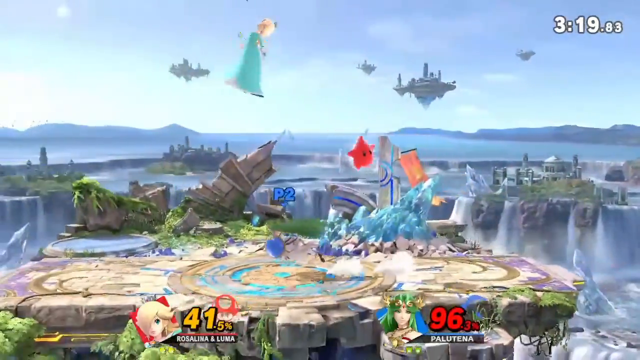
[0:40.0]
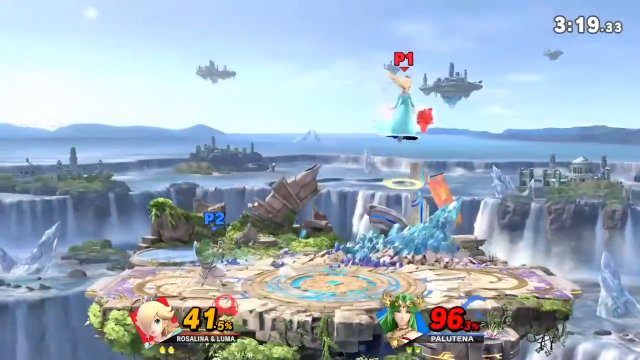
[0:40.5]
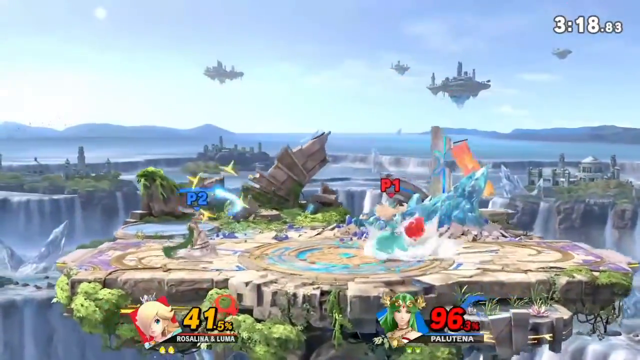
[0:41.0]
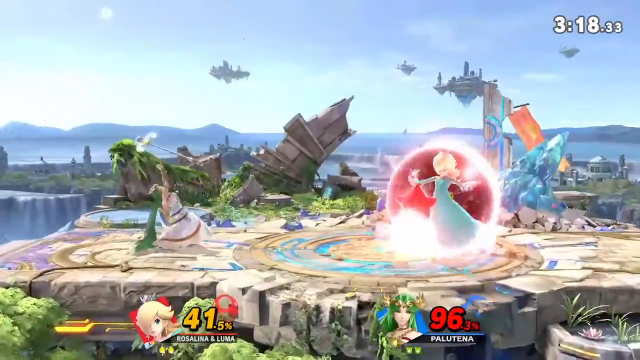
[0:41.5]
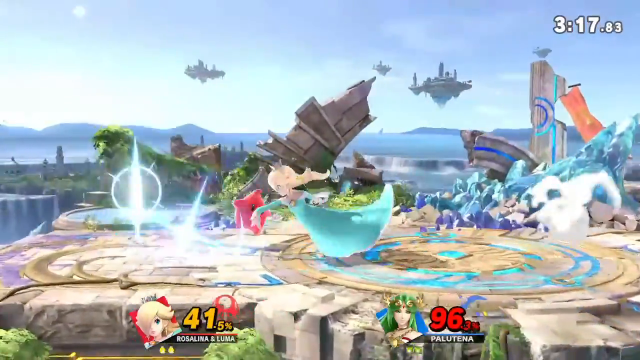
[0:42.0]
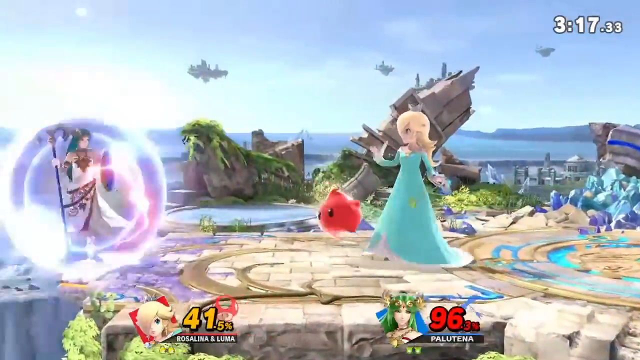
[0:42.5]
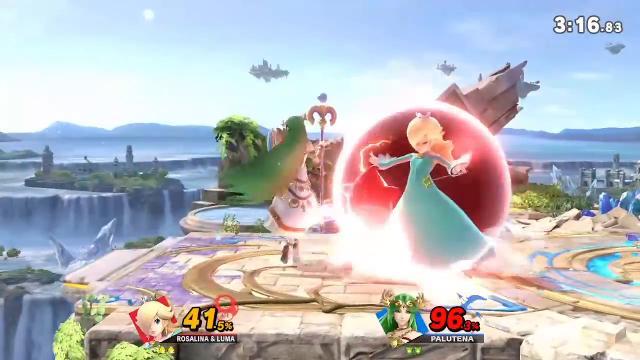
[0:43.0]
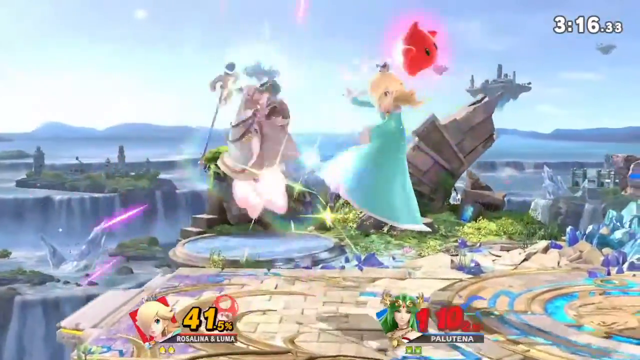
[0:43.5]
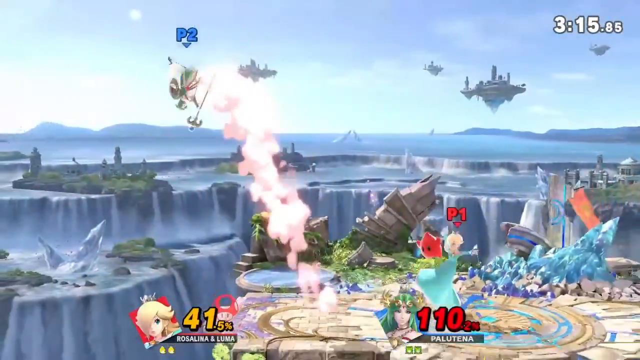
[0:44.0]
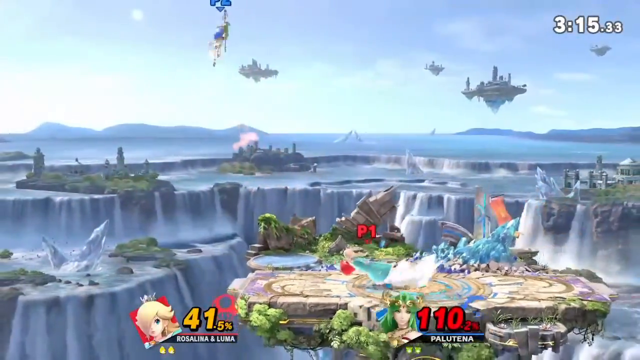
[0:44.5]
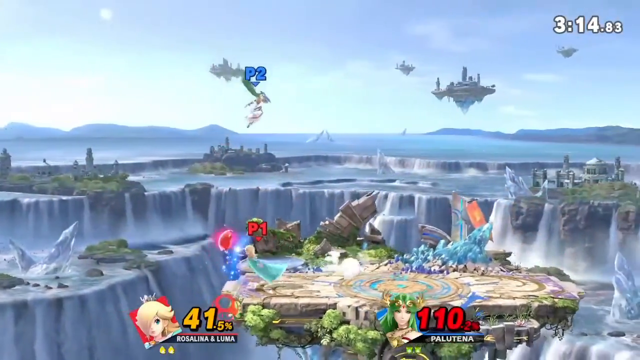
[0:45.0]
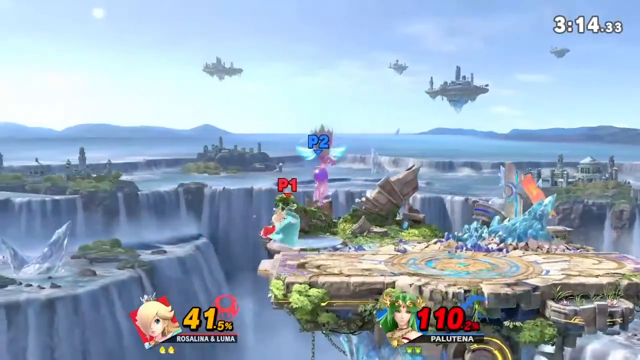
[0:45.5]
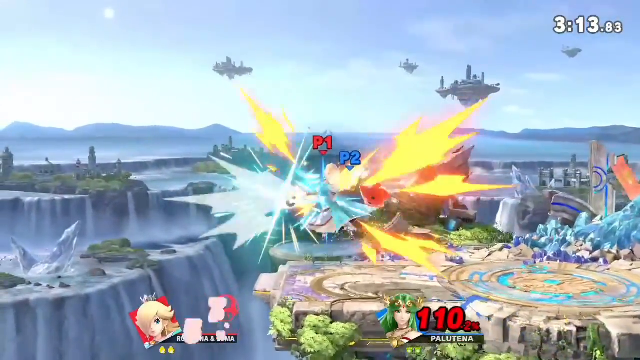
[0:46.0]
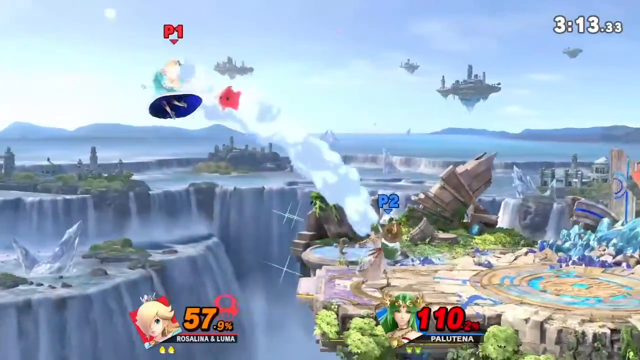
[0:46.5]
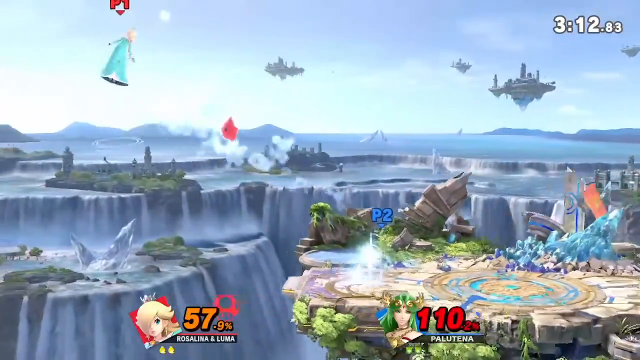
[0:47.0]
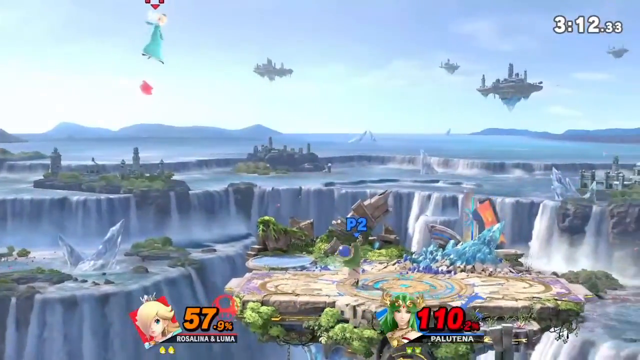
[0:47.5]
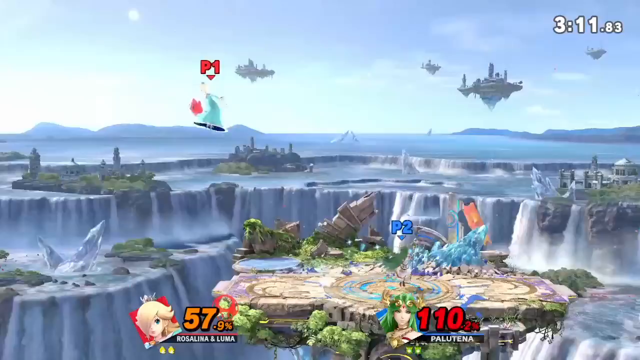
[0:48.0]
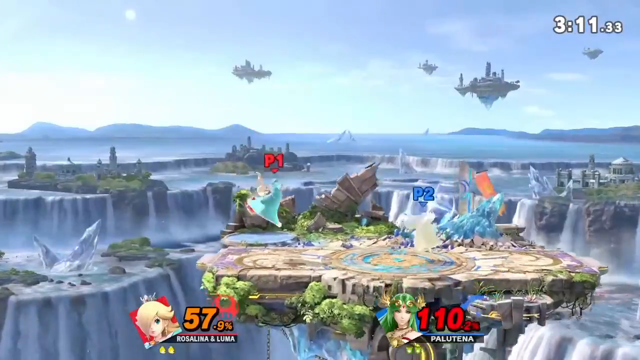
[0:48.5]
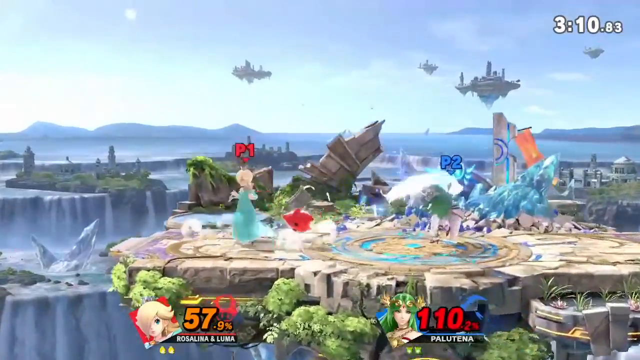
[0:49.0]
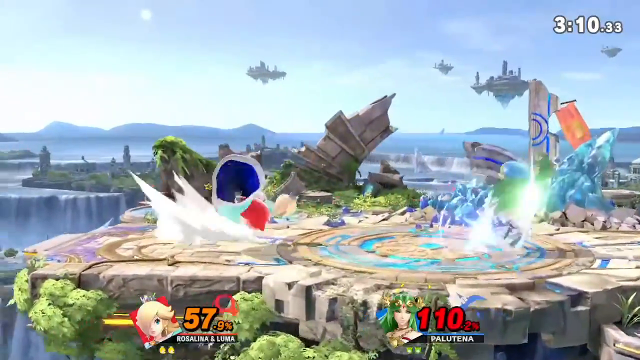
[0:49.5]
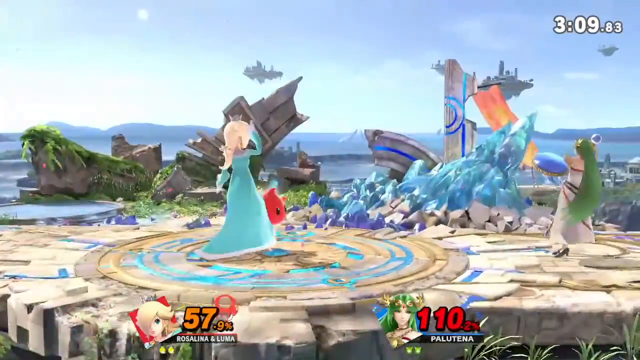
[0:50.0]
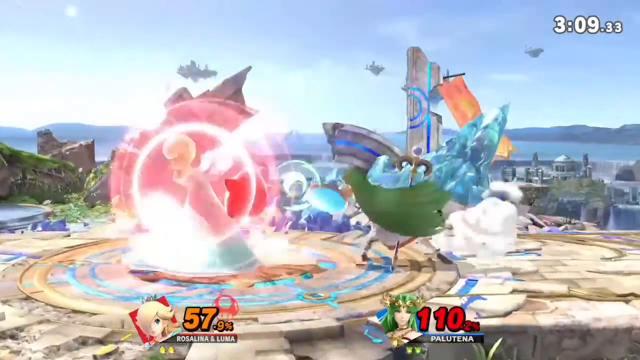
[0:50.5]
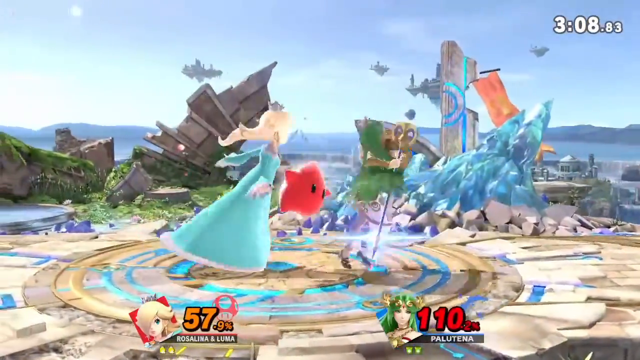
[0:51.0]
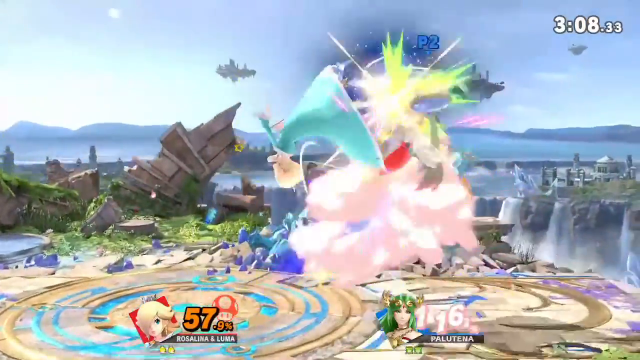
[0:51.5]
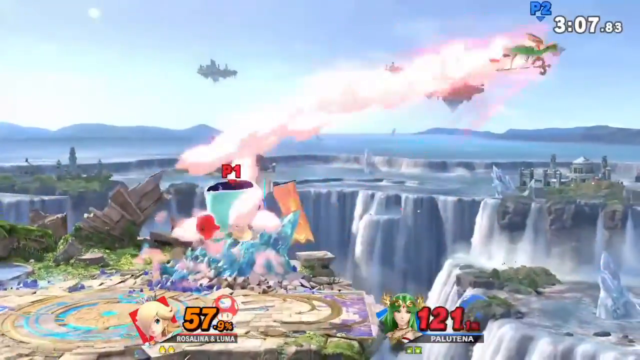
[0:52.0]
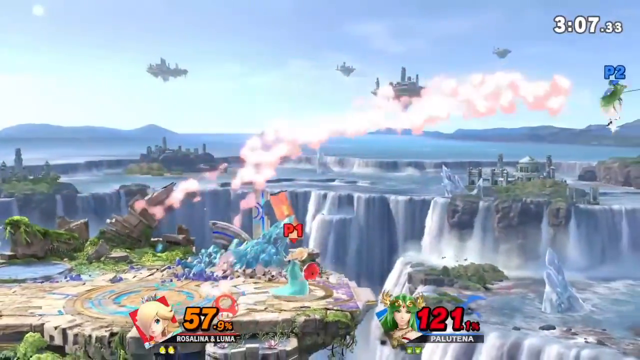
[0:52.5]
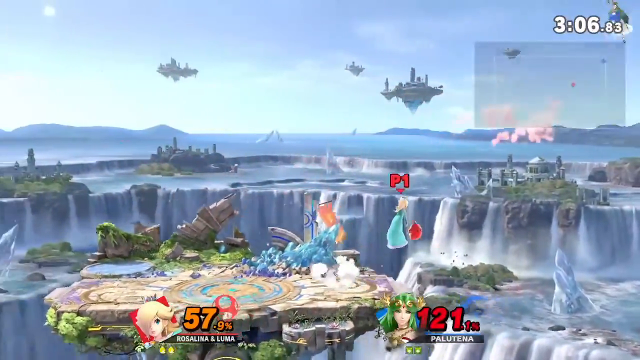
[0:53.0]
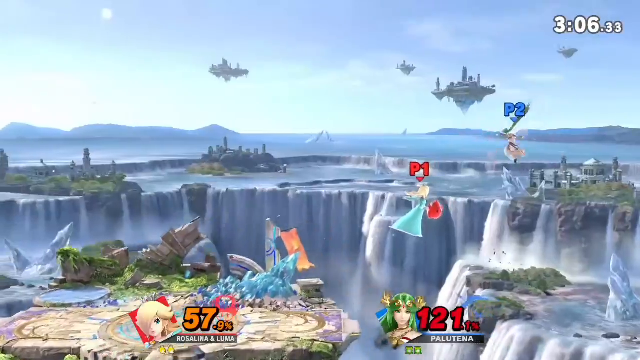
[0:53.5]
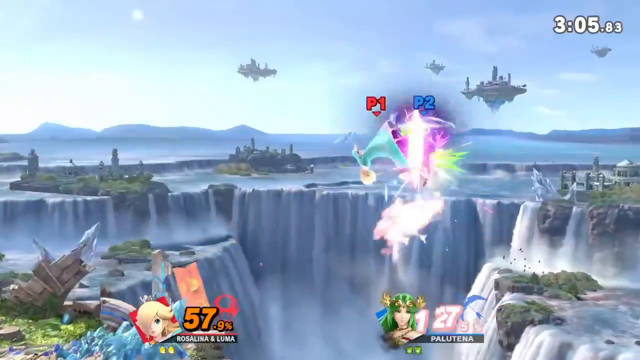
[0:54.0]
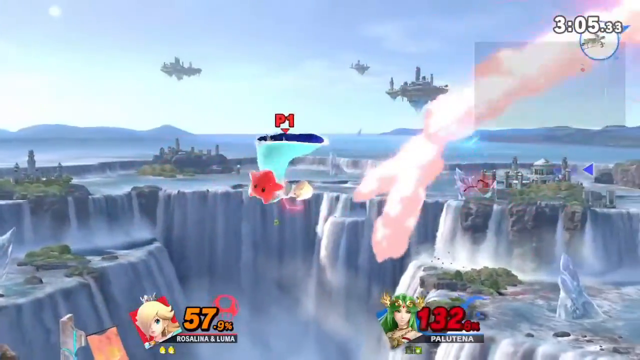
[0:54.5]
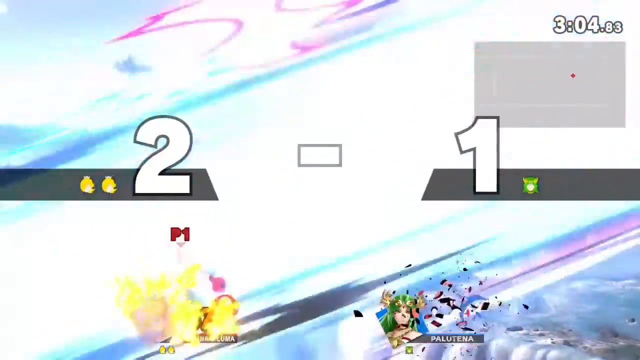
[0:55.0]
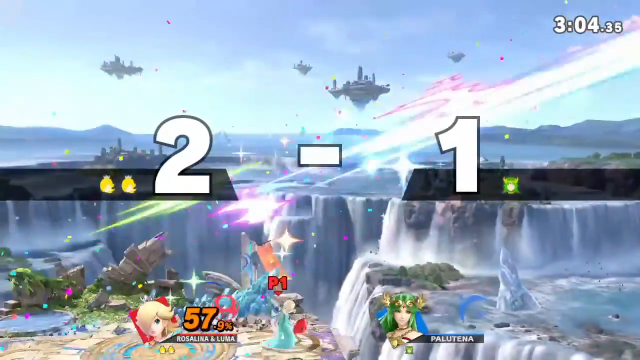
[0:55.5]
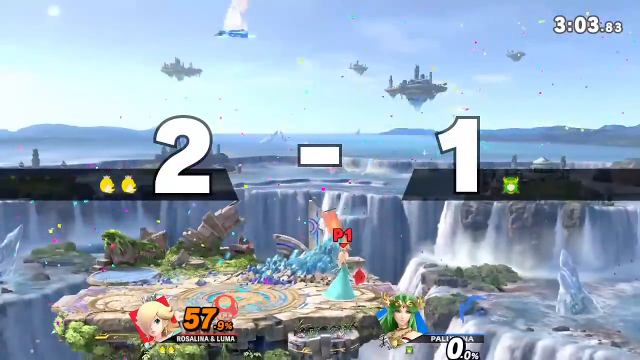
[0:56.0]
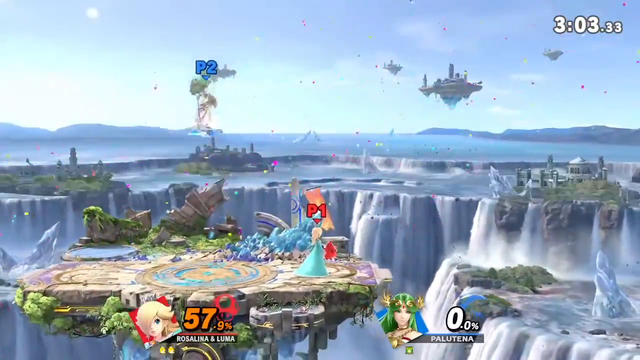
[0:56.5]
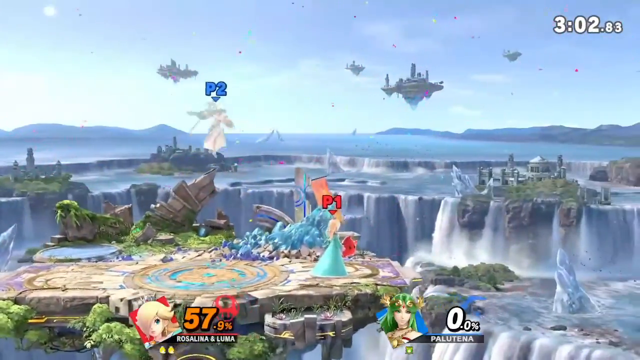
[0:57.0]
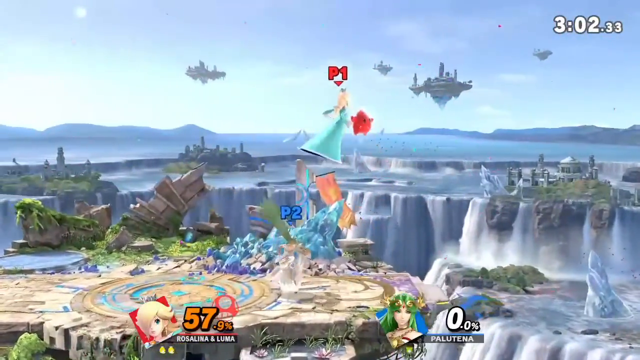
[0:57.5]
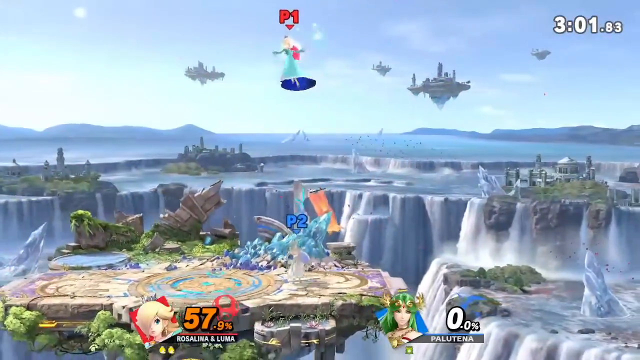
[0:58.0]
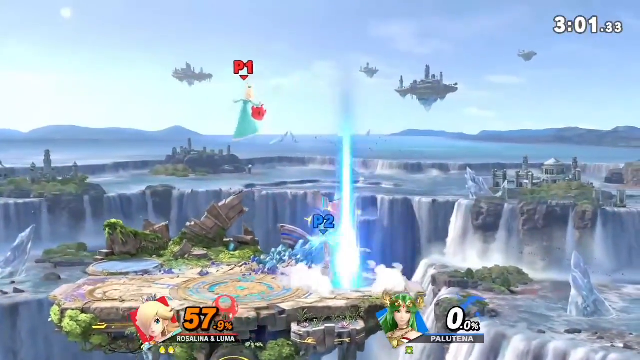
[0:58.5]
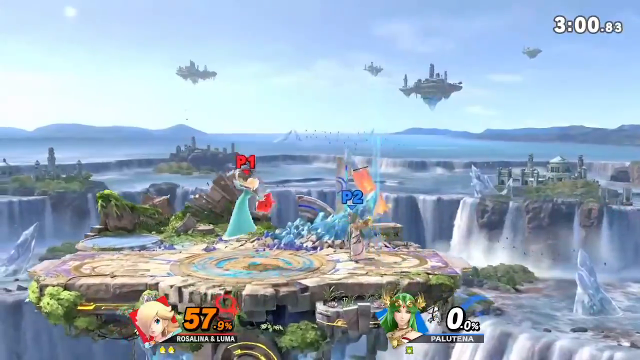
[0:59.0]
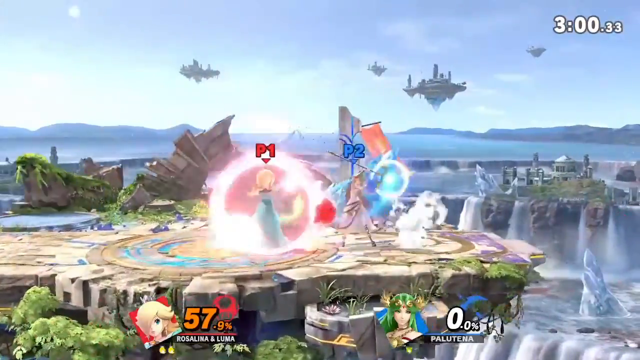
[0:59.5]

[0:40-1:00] The fight continues with Rosalina at 41.5% damage and Palutena at 110.2%, and Rosalina still appears to be winning. As Palutena takes multiple hits, numbers pop up on the screen reading "2-1", and Palutena's number resets to 0. This apparently shows the number of lives: the fight continues, Palutena's number resets to 0 while Rosalina's stays in the 40s, seemingly indicating that Palutena lost a life while Rosalina continues with the same life. Rosalina is up to 57.5% when Palutena starts her new life at 0% damage. Both characters are female, and they keep fighting on the raised stone platform in the sky. There is an orange and yellow flag on the platform. They occasionally jump off the side of the platform but use some sort of jumping skill to land back on it and continue the fight.